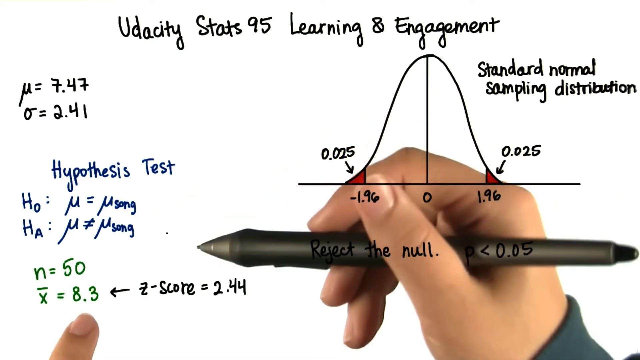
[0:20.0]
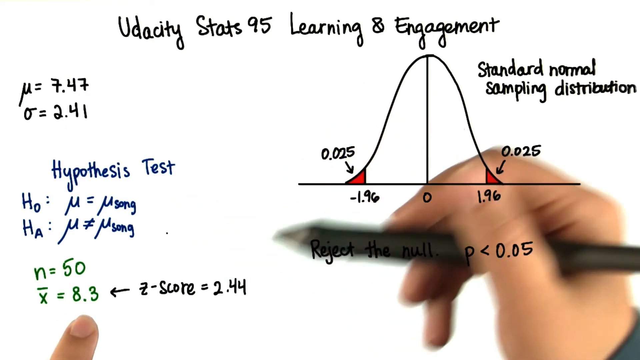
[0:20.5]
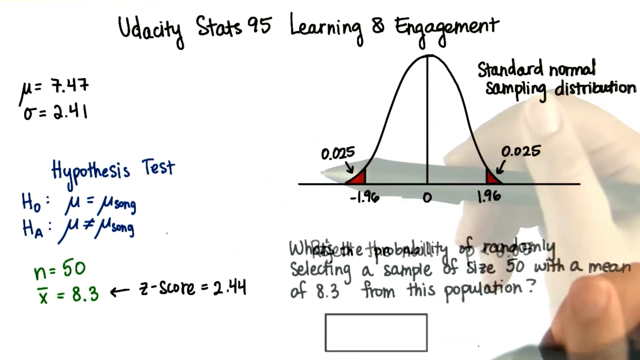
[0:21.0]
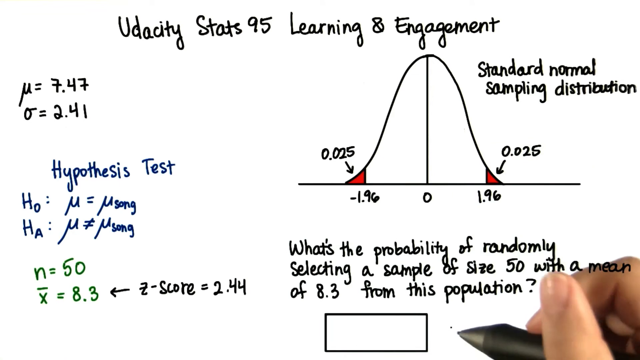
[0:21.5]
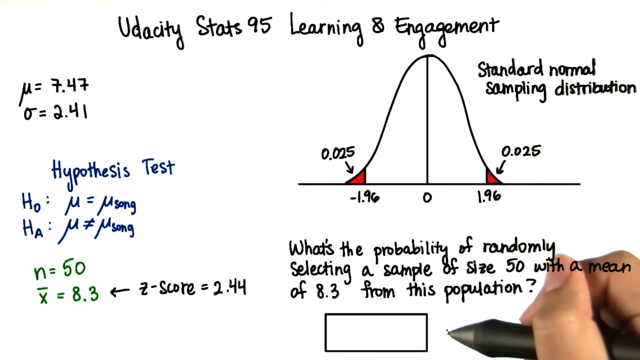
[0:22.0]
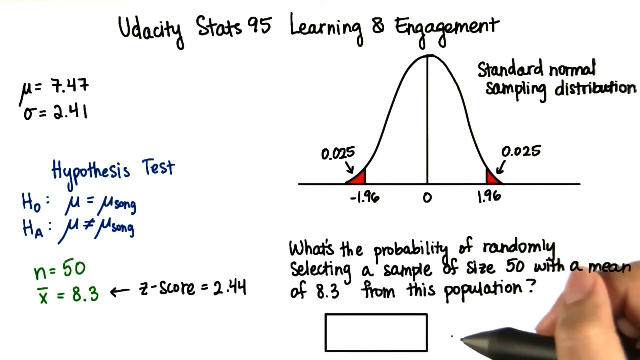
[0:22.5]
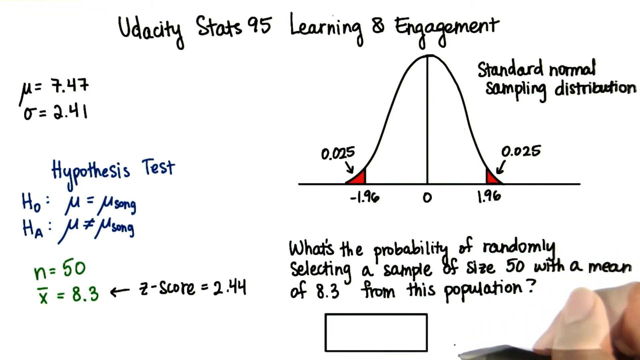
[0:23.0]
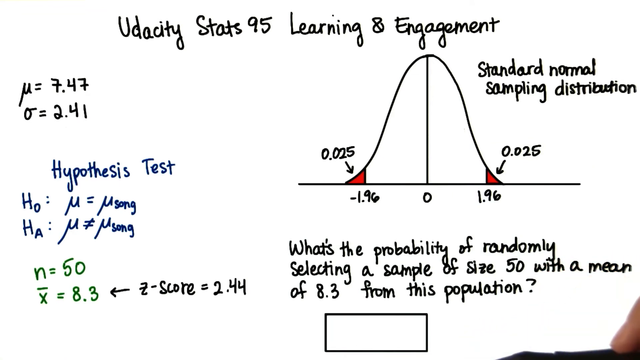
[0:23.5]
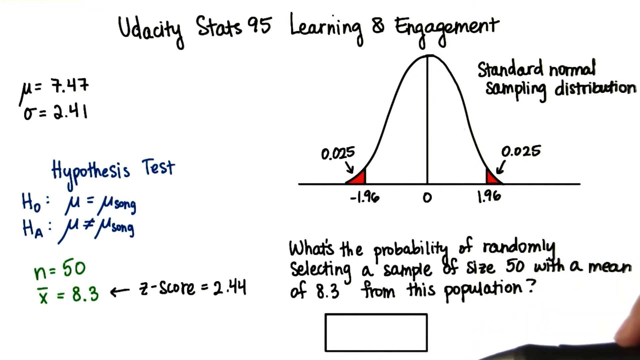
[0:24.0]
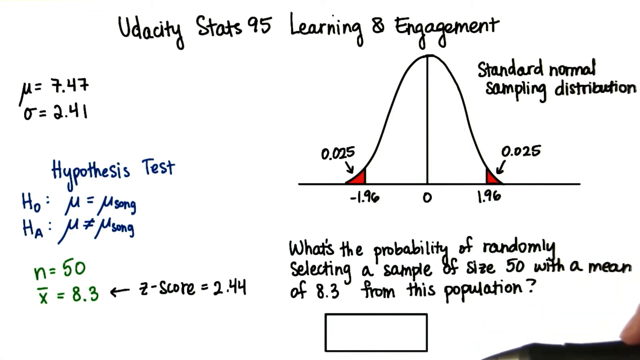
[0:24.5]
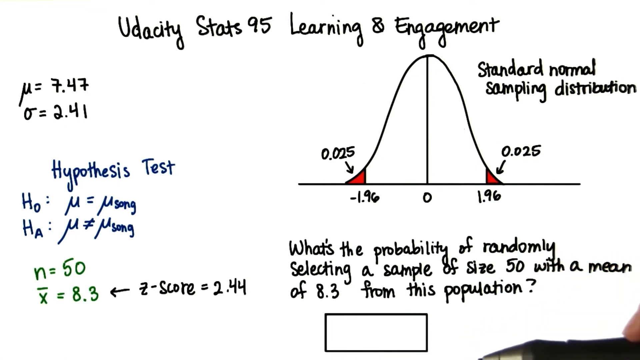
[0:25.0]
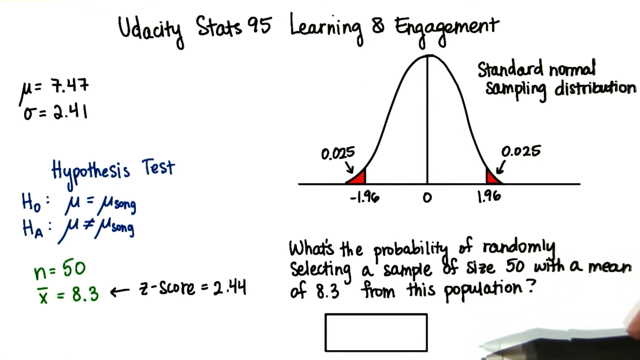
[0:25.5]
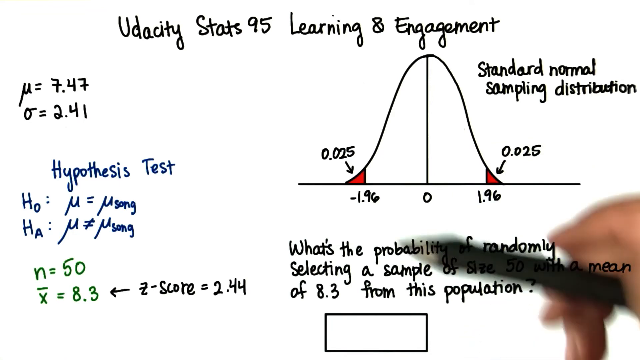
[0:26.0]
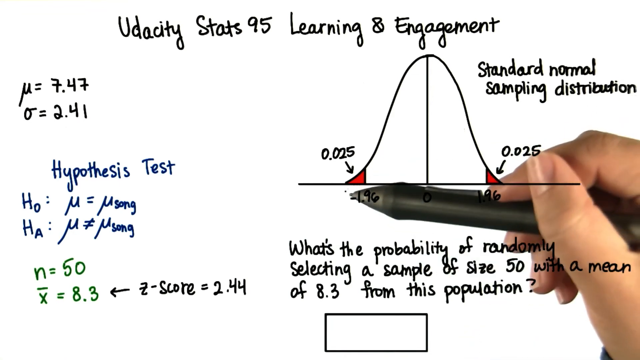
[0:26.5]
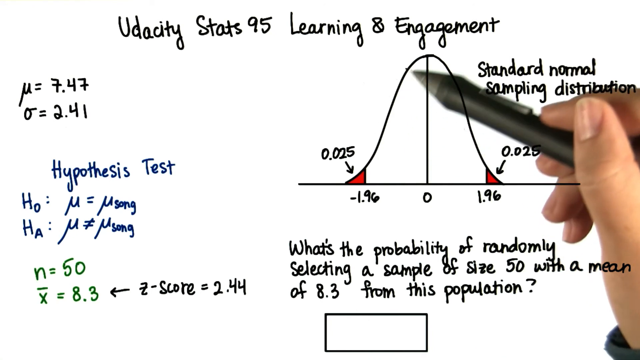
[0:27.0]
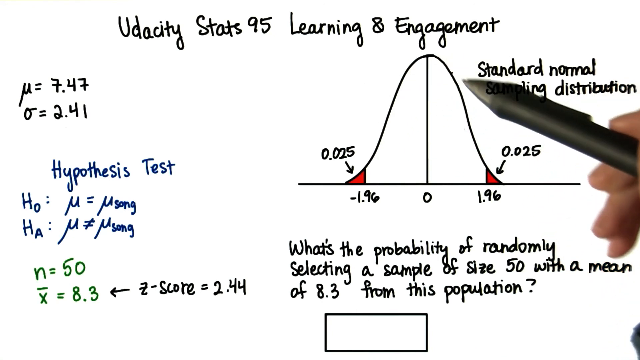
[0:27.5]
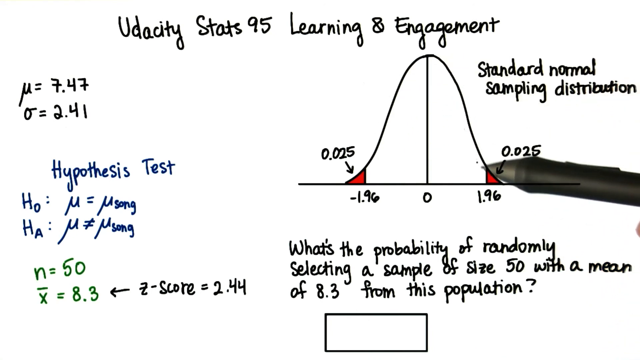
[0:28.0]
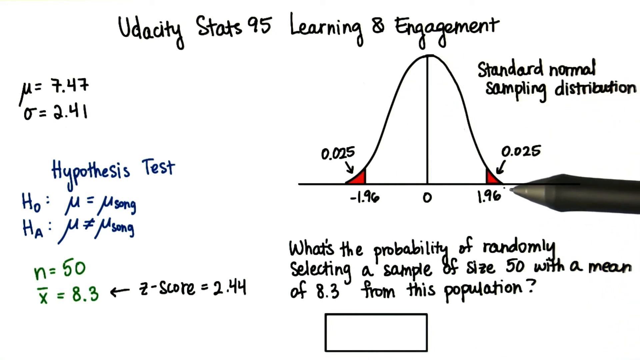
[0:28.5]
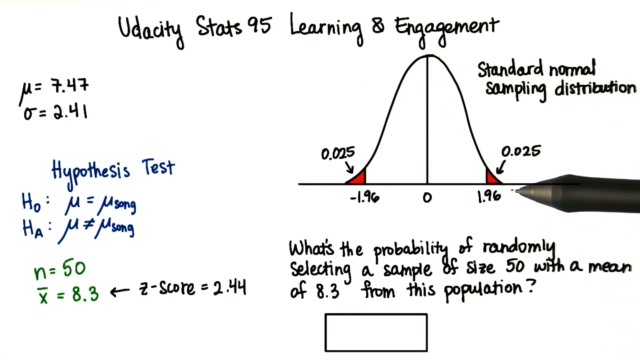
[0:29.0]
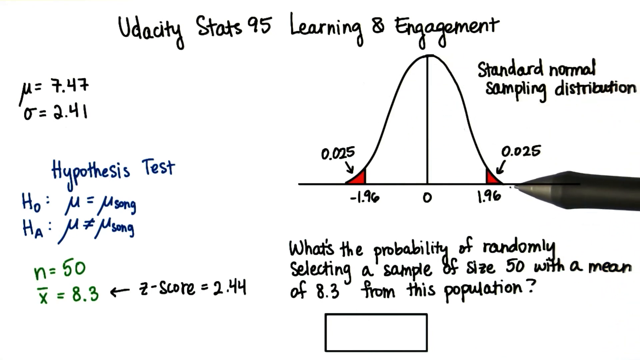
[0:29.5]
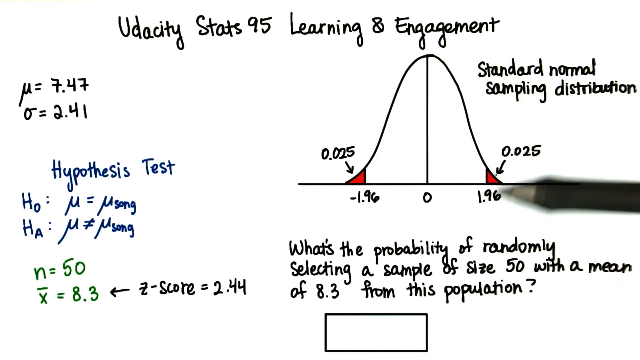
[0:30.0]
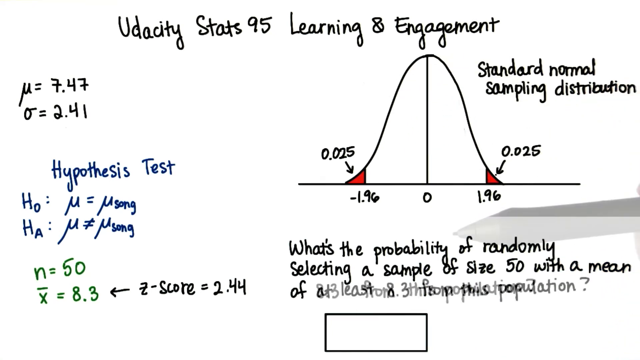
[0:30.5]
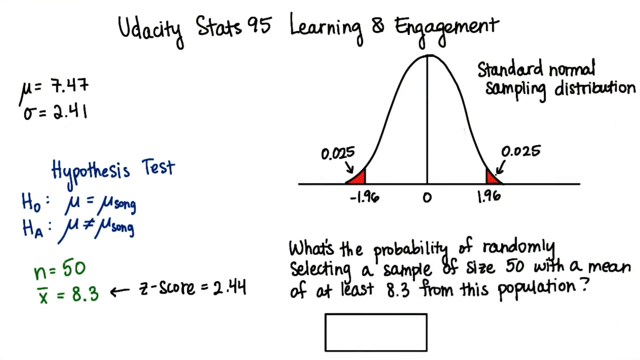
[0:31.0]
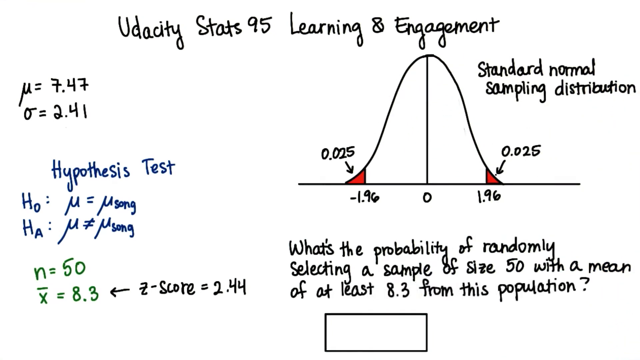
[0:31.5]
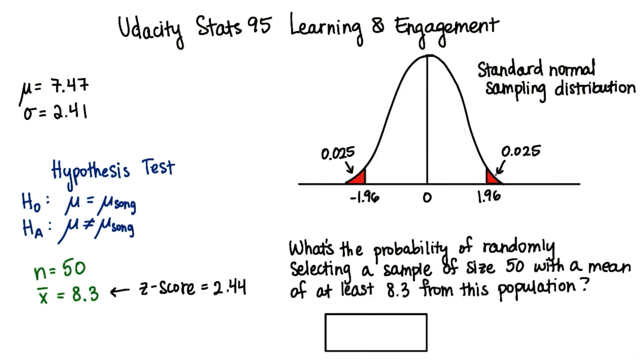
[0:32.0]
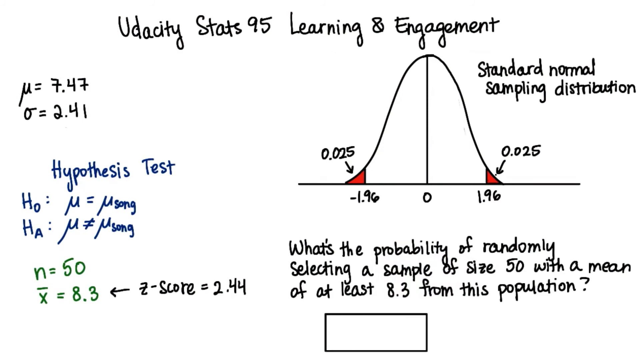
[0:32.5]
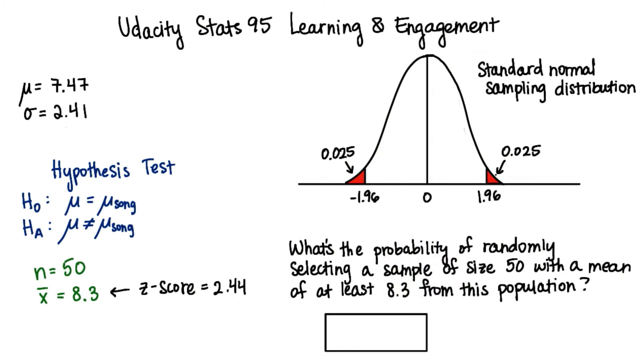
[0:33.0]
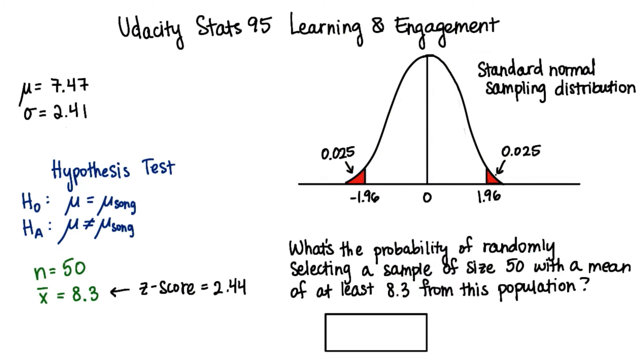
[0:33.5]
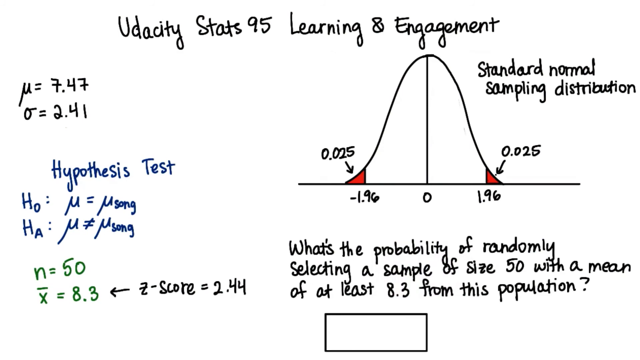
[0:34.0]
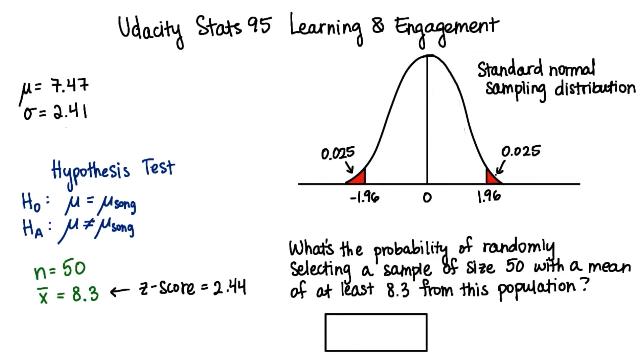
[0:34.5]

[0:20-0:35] The calculations and formulas remain on screen. A new section in black appears in the bottom right-hand corner, saying "what's the probability of randomly selecting a sample of size 50 with a mean of 8.3 from this population?" with a little box underneath it. The finger with the pen goes to the sampling distribution graphic and then disappears, leaving the rest unchanged. The background is white. On the normal sampling distribution graphic, the sections on either end, marked 0.025, each have a little red notch, apparently calling attention to those areas.